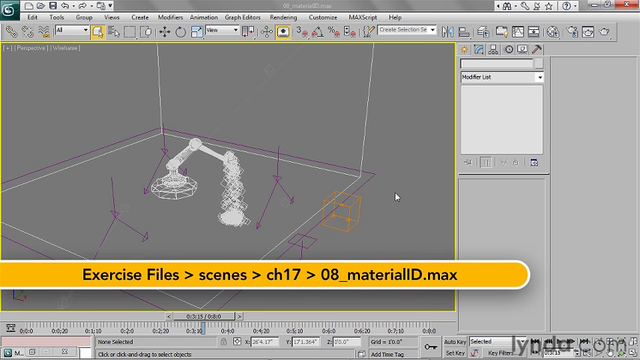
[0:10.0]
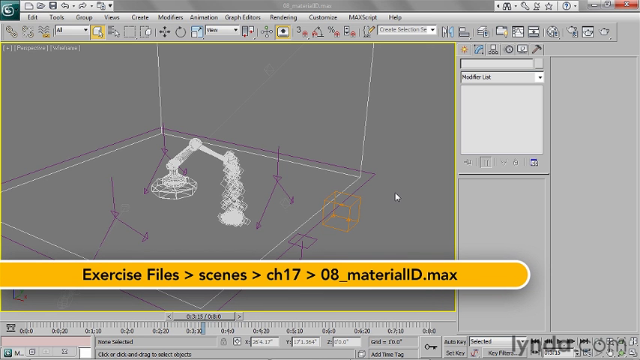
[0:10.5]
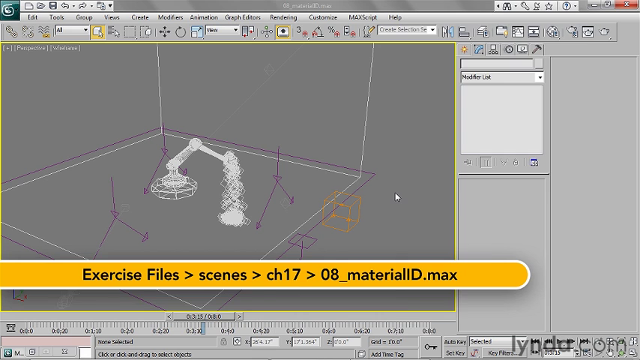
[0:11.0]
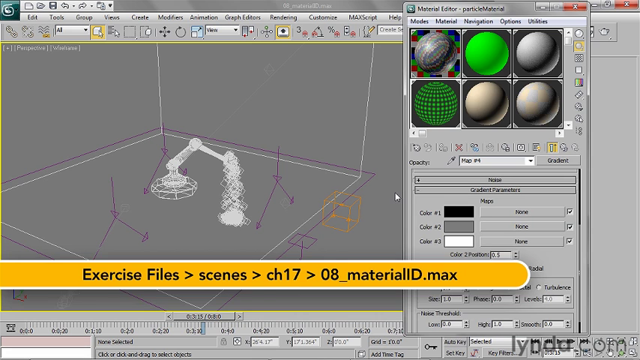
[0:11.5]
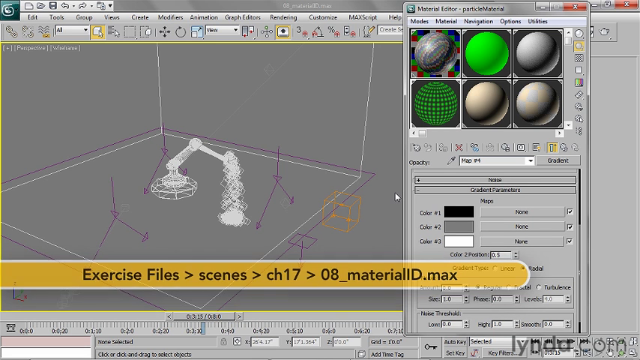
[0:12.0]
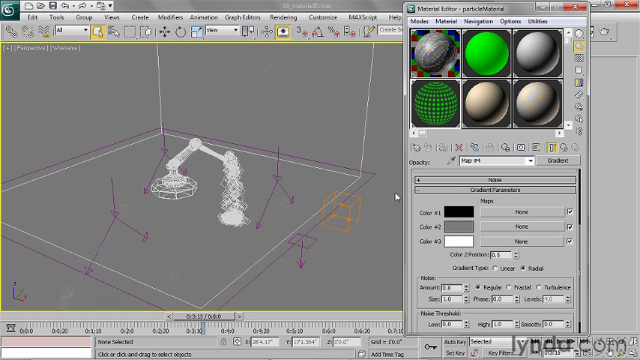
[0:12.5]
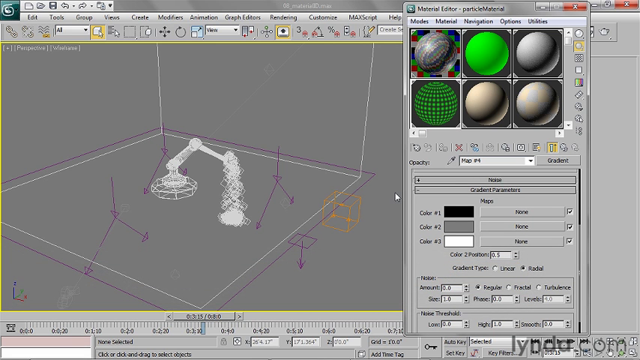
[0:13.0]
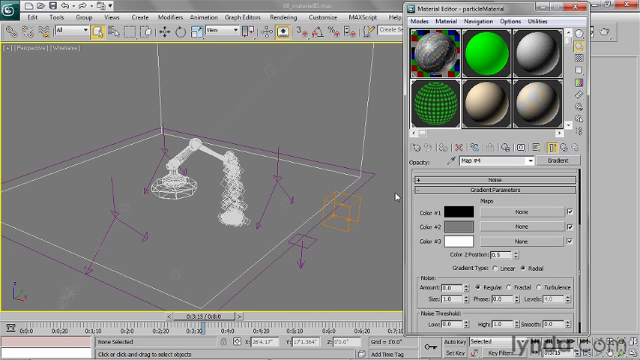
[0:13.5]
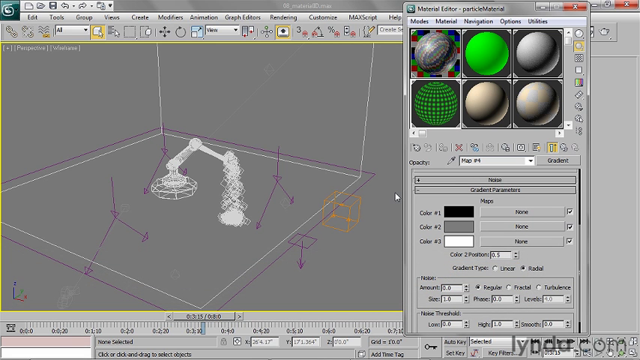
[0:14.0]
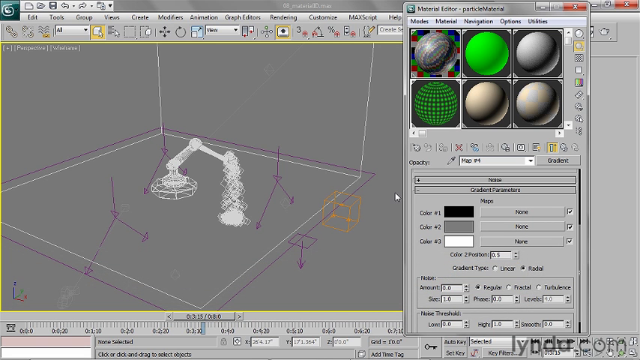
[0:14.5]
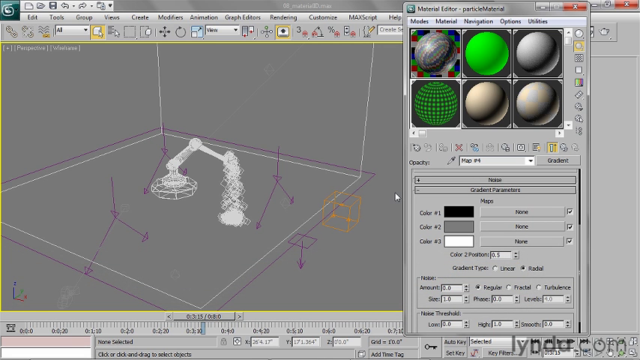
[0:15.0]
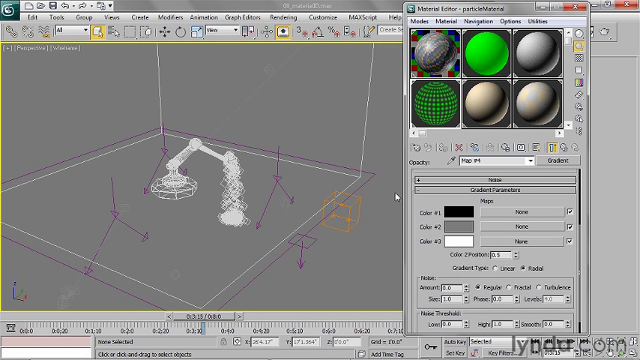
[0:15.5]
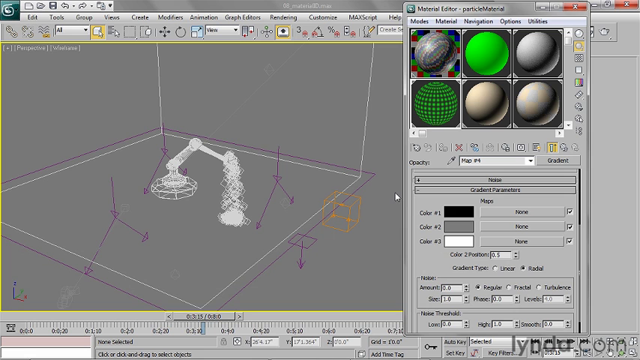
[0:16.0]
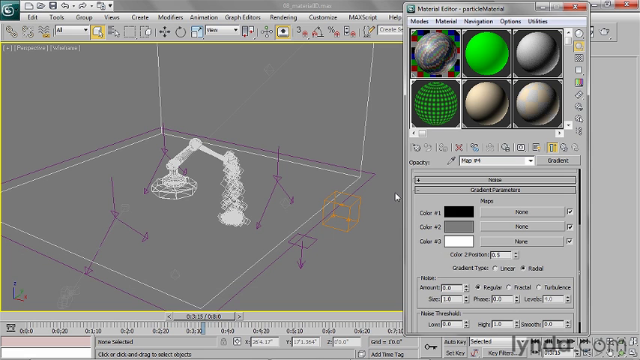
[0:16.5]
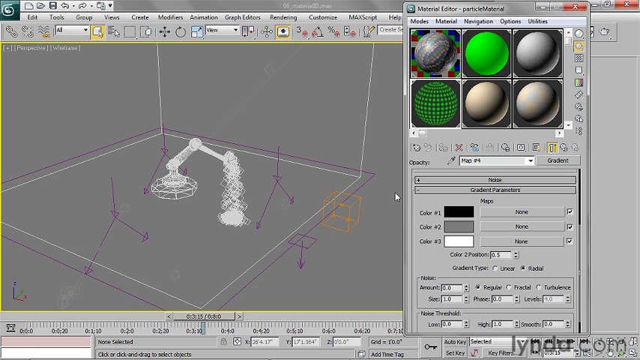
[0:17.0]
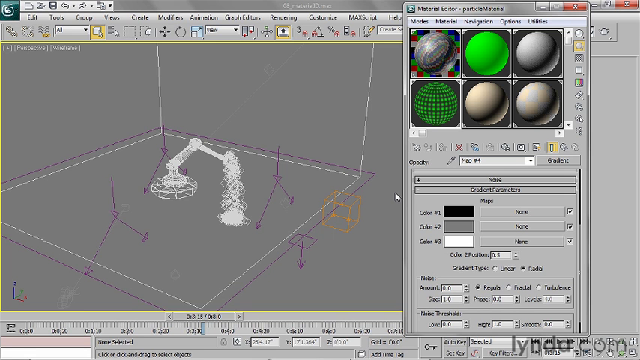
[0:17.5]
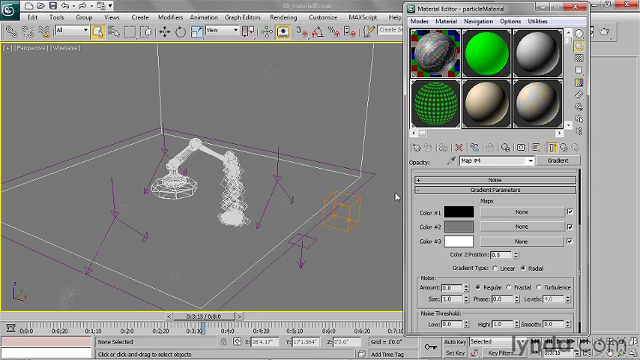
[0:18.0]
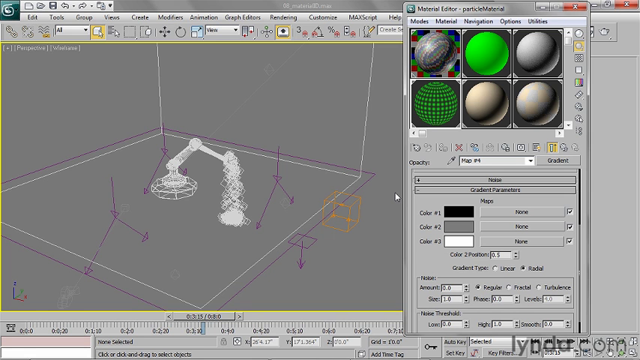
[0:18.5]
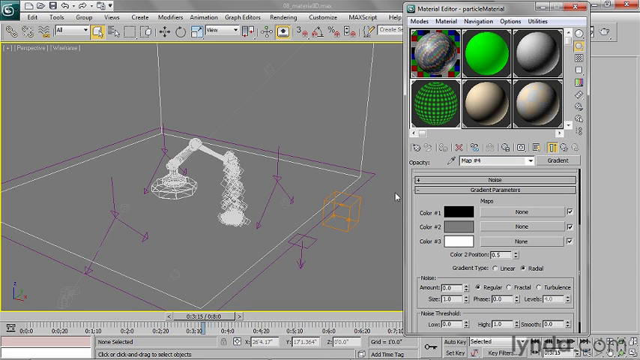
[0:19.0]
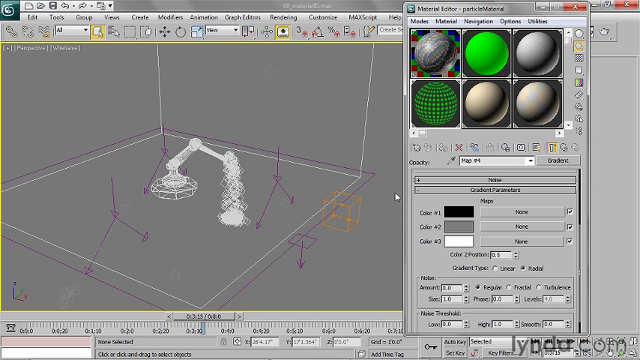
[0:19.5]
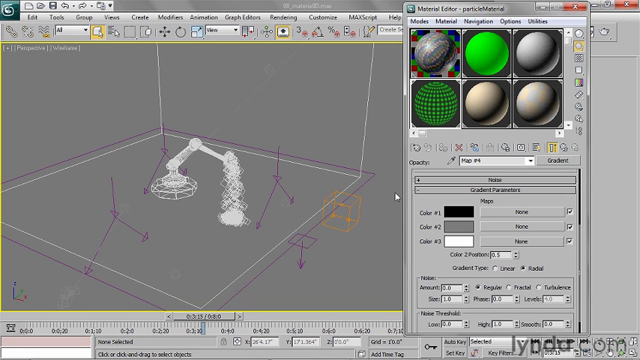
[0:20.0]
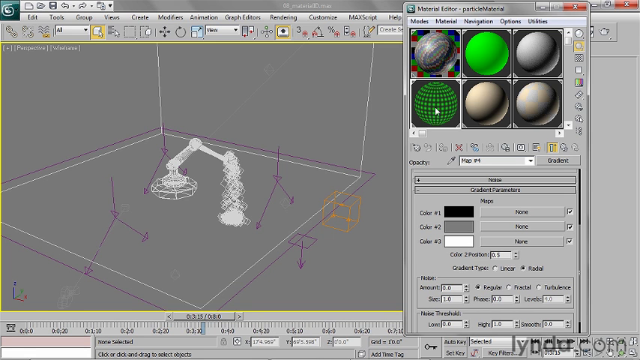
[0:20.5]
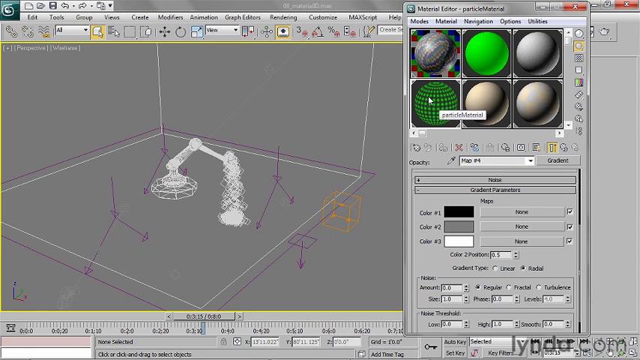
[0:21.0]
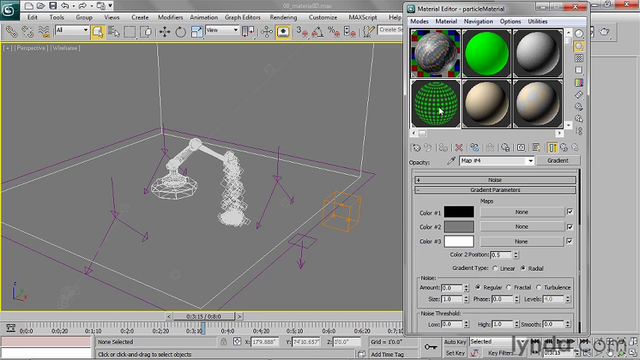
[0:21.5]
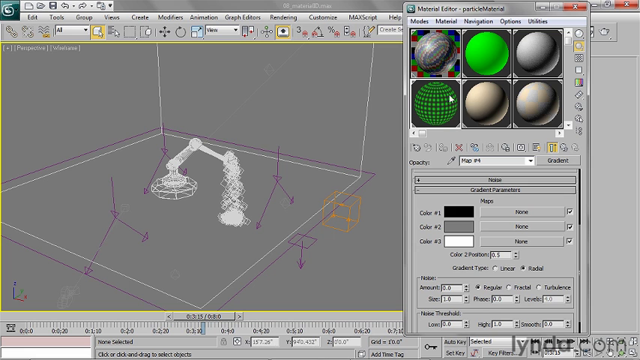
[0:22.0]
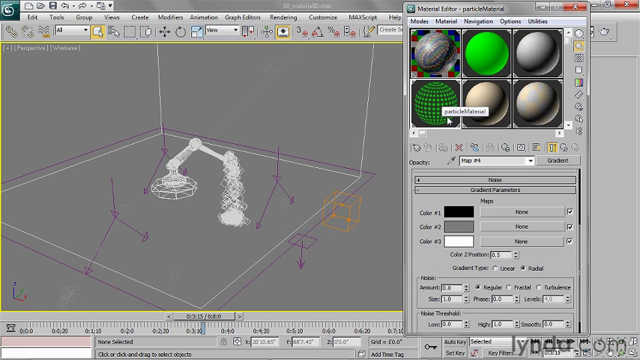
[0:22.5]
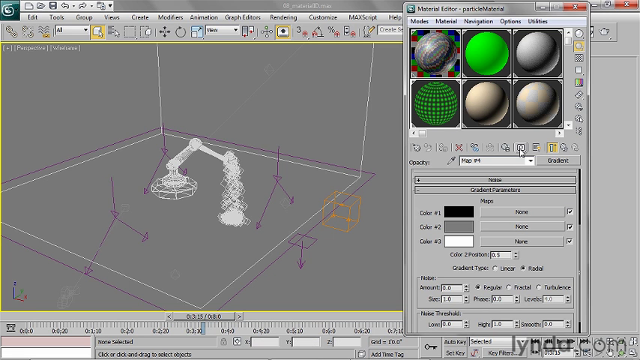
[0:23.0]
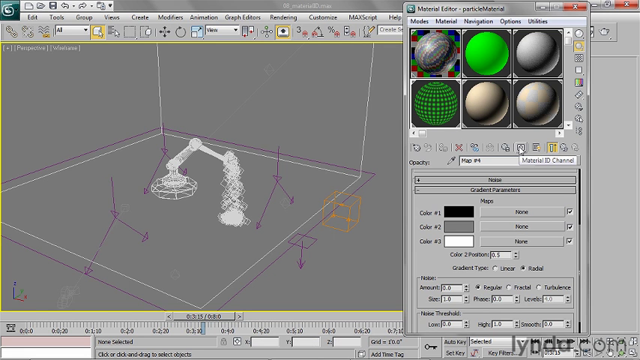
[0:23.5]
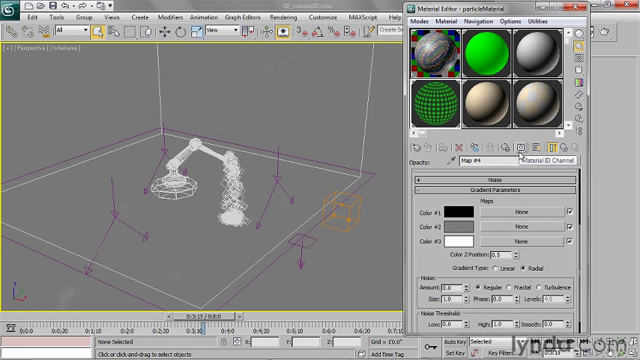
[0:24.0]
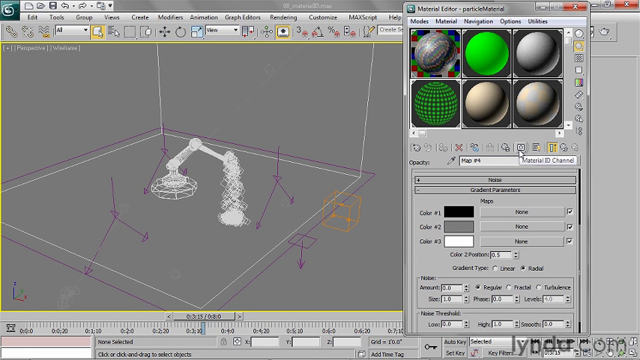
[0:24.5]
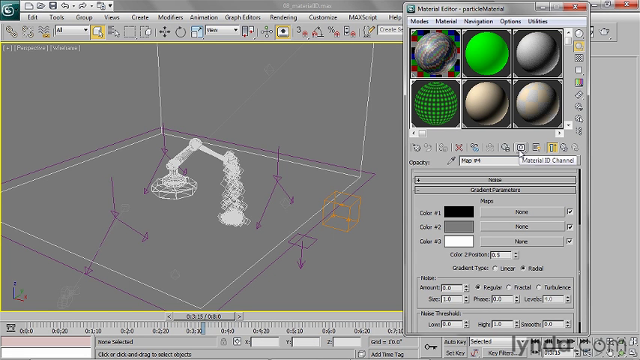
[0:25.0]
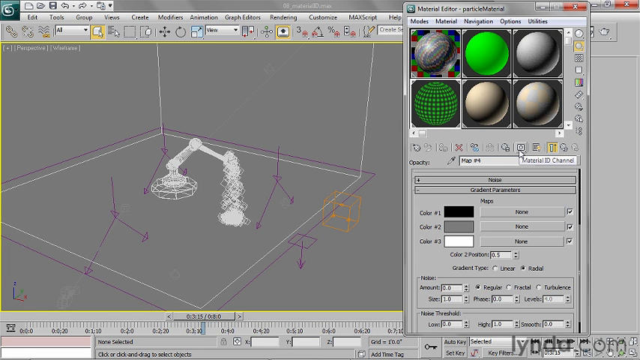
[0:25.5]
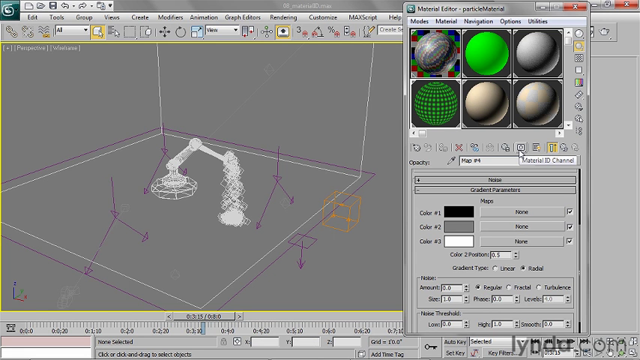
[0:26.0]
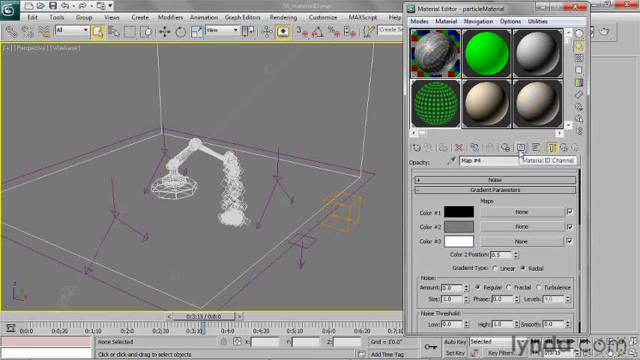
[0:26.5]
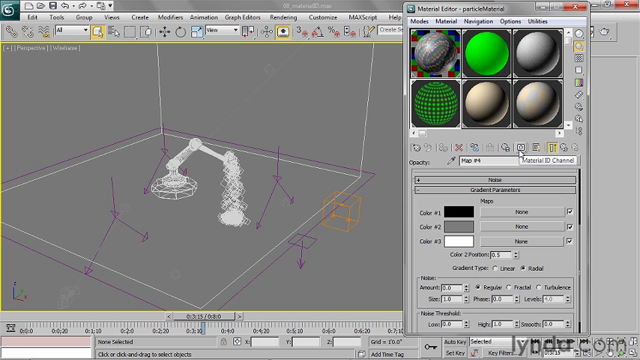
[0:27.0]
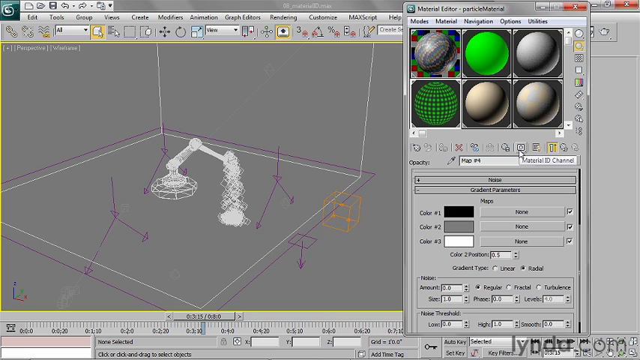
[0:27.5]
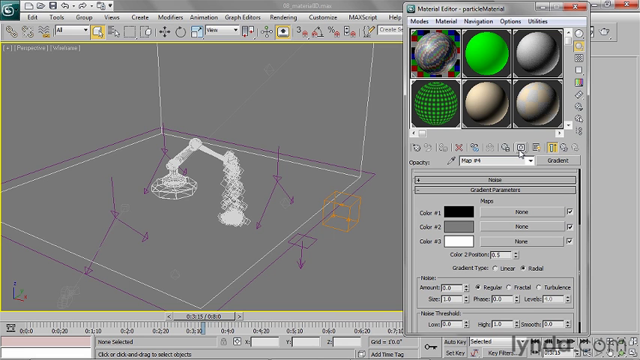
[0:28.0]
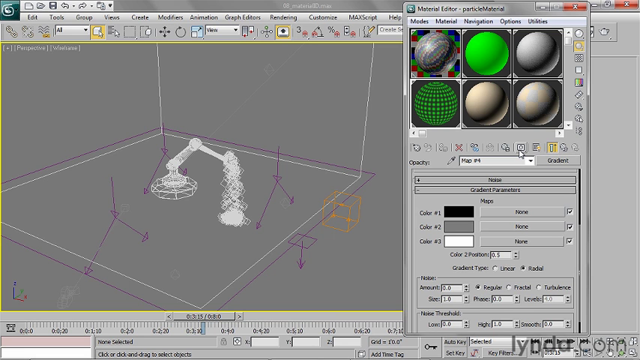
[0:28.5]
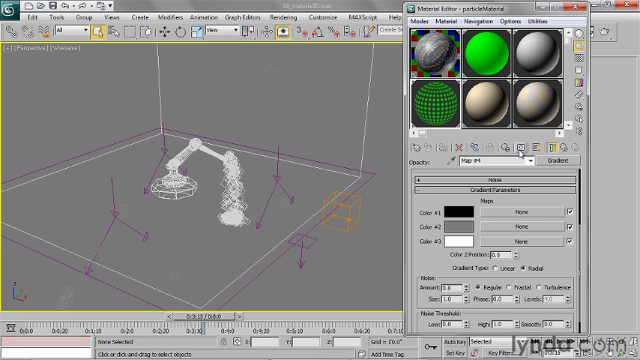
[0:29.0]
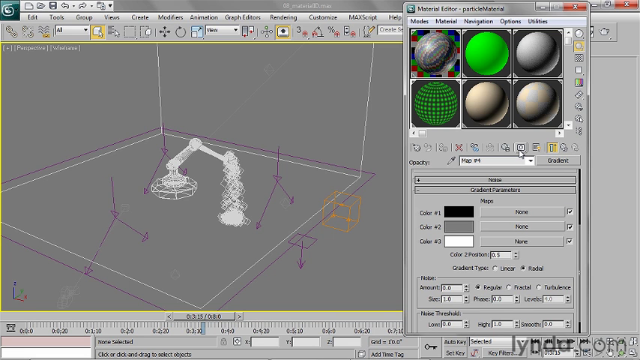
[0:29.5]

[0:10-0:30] The same scene continues, now with an orange stripe with a white boundary toward the bottom. It shows a path through "exercise files", "scenes" and "chapter 17" to "08 material ID.max". When that bar exits, a pull-down on the right-hand side shows six different spheres at the top with varying kinds of textures, ranging from smooth to kind of marbly to one that is kind of just dots, a circle of dots. That sphere is the one highlighted; the cursor, which is in the middle of the screen at first, moves to it and then clicks the button that says "material ID channel", choosing the material ID channel for this object.